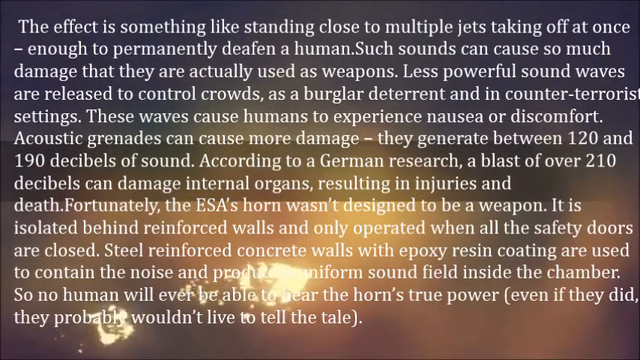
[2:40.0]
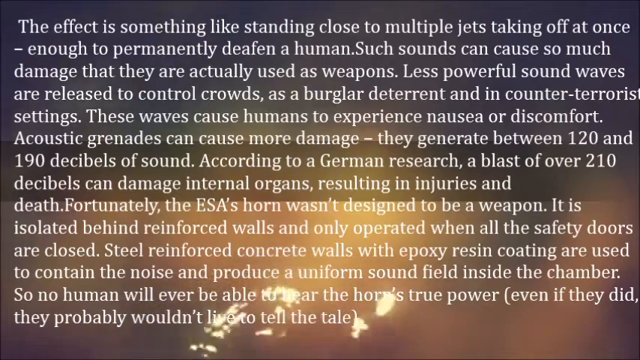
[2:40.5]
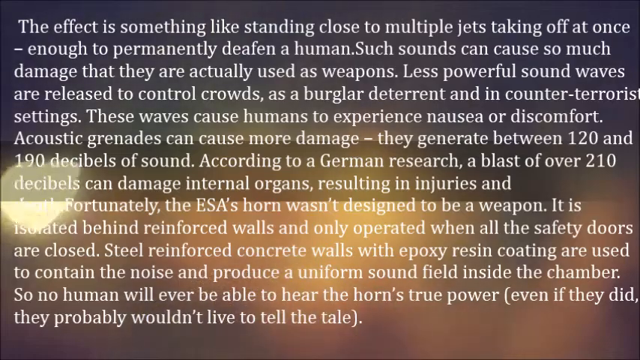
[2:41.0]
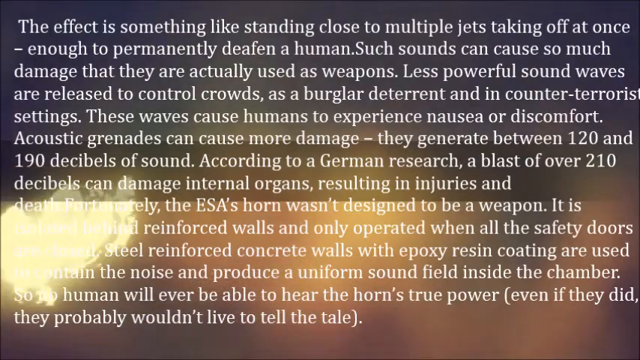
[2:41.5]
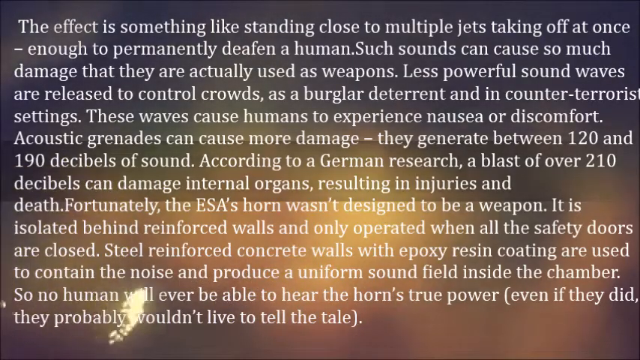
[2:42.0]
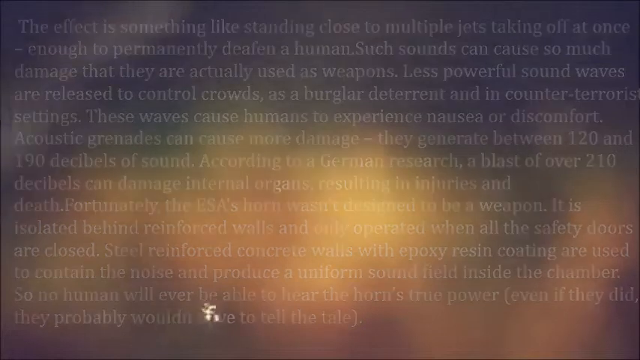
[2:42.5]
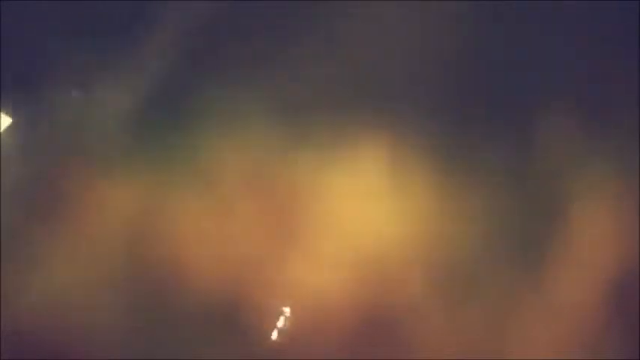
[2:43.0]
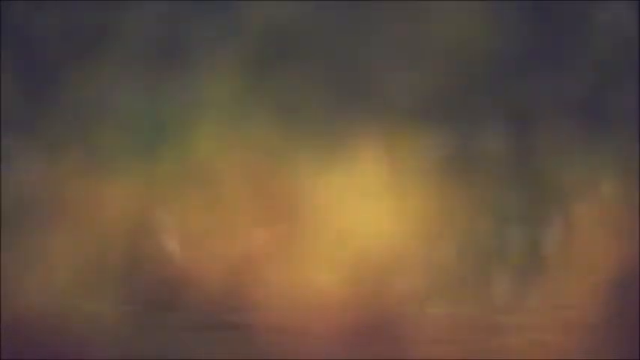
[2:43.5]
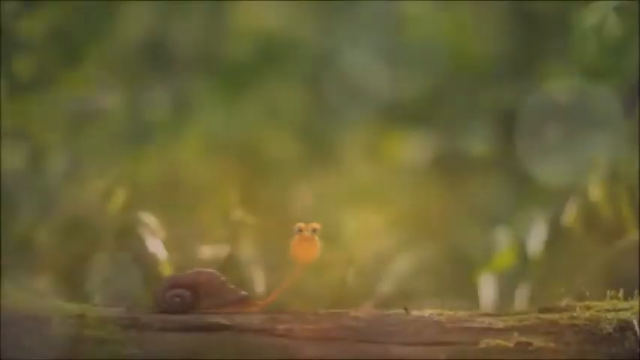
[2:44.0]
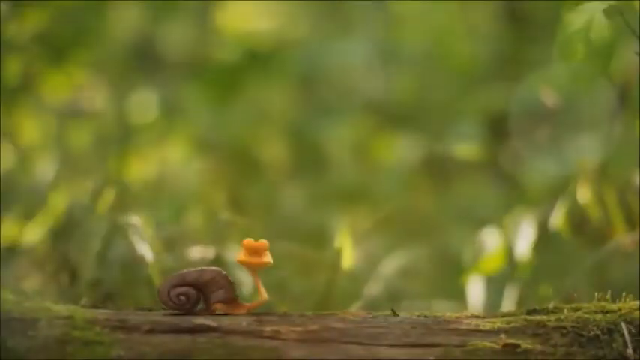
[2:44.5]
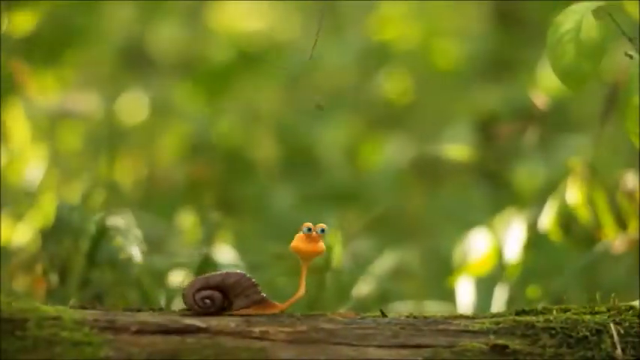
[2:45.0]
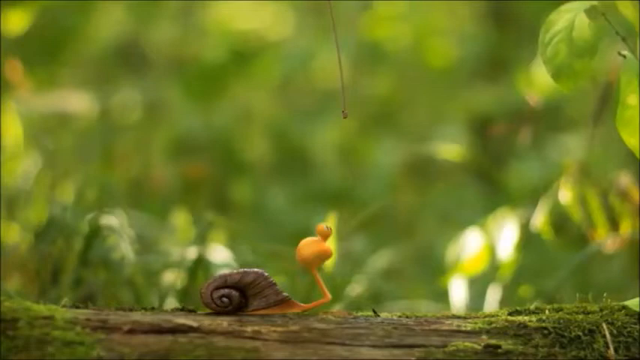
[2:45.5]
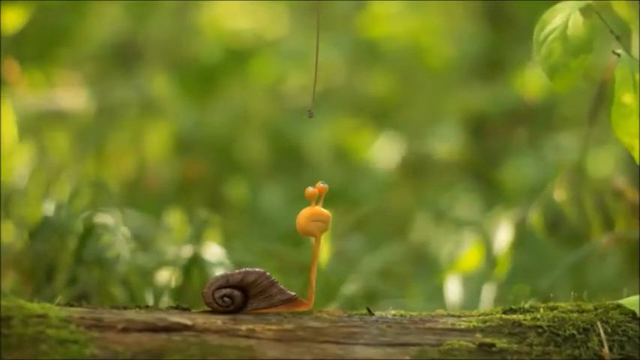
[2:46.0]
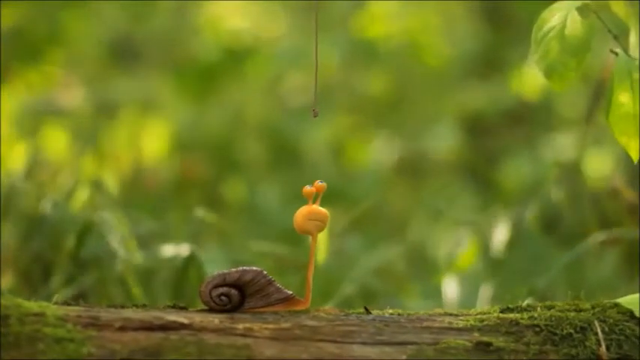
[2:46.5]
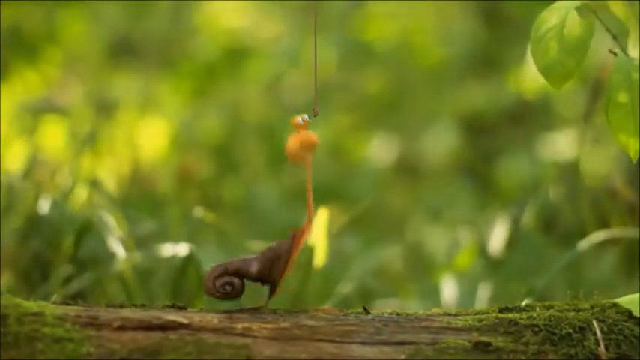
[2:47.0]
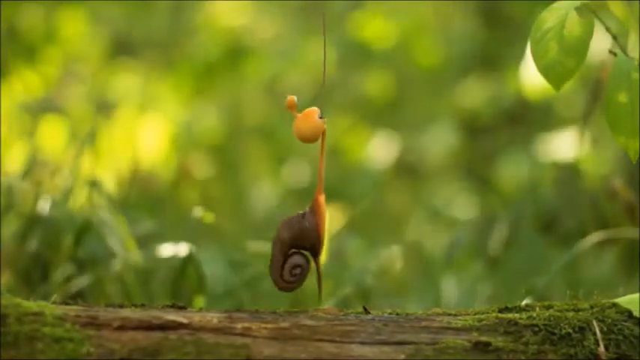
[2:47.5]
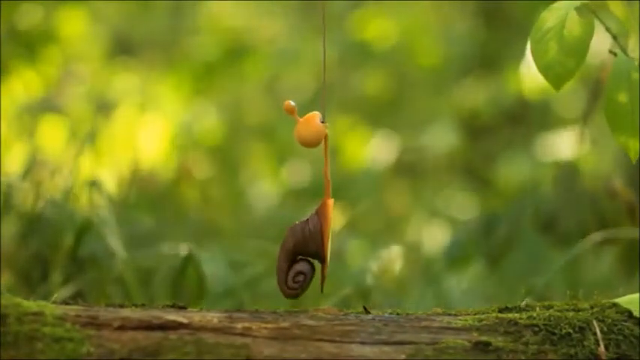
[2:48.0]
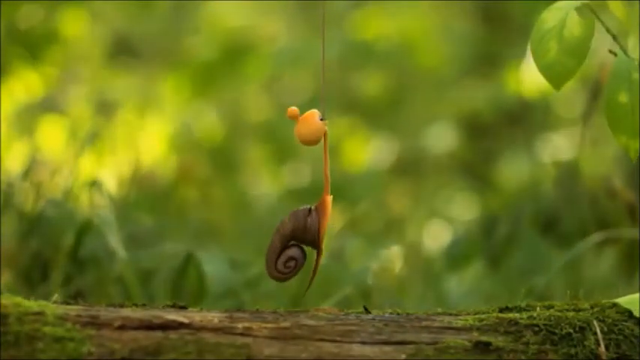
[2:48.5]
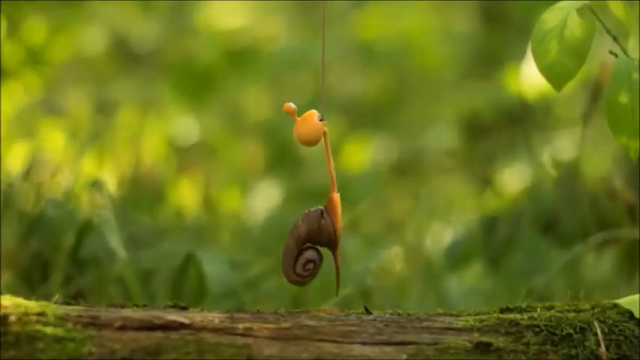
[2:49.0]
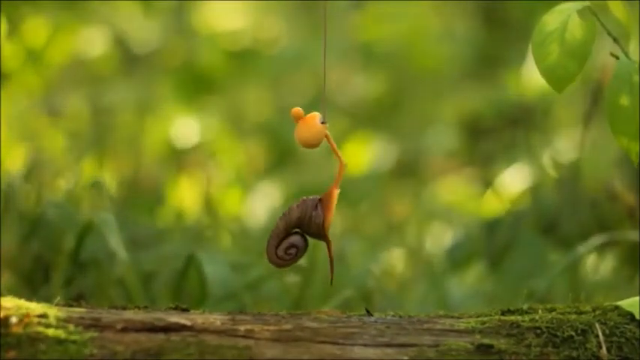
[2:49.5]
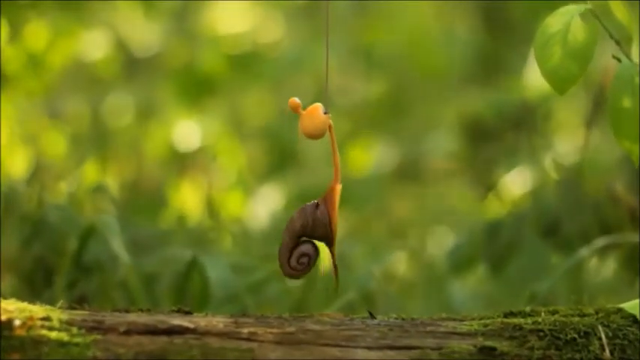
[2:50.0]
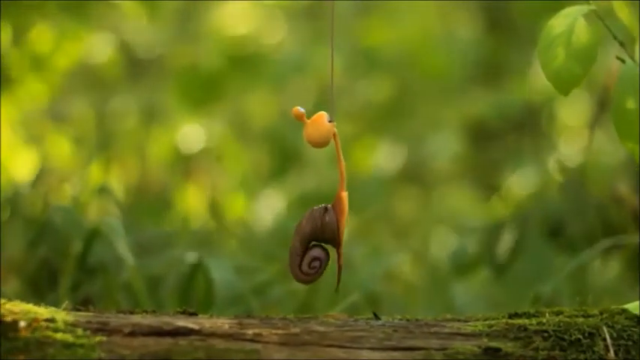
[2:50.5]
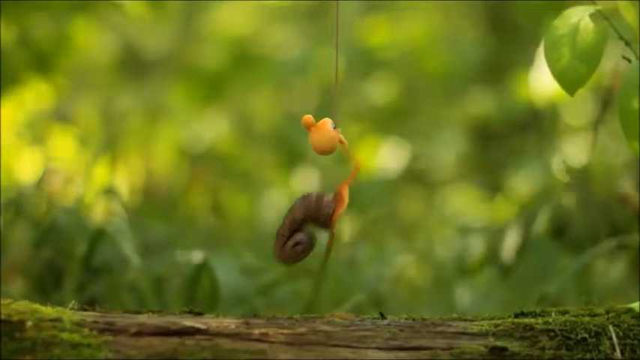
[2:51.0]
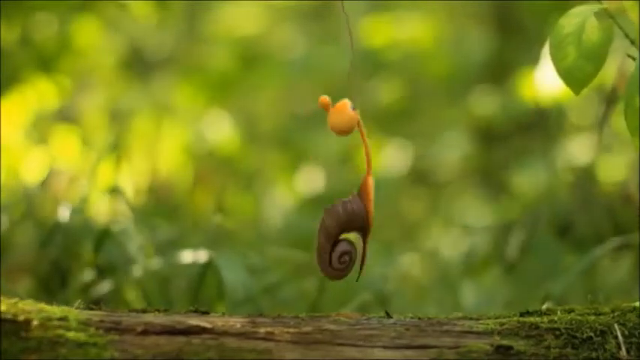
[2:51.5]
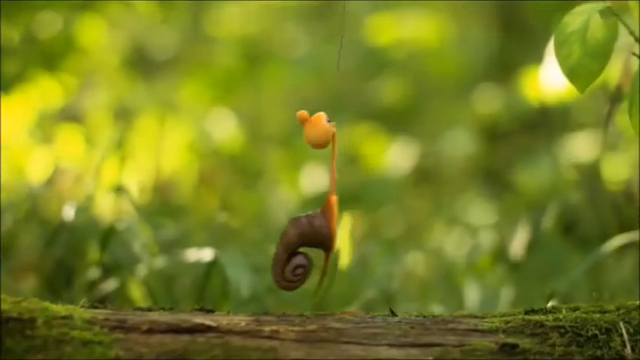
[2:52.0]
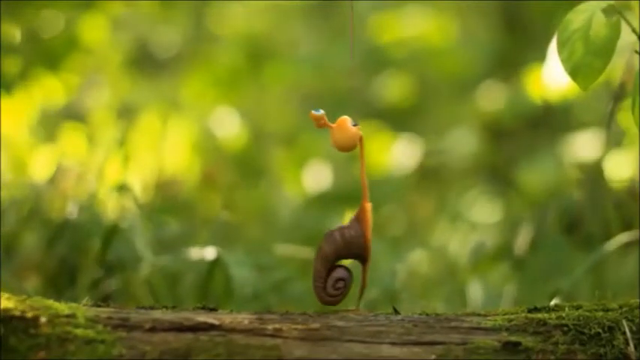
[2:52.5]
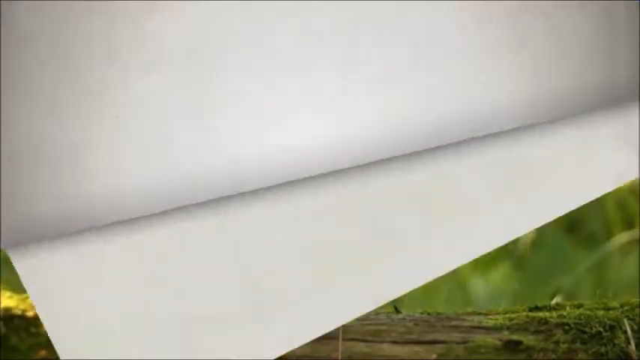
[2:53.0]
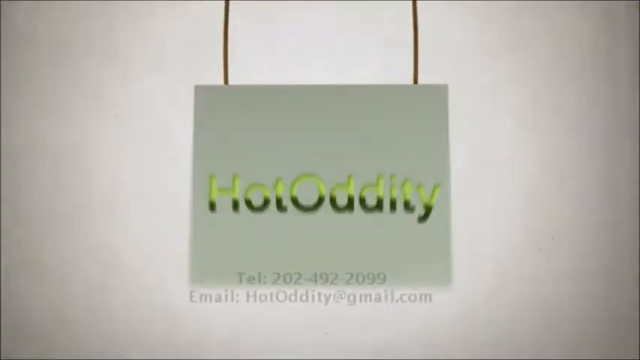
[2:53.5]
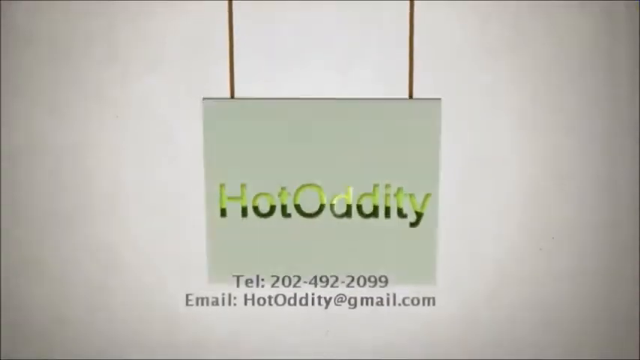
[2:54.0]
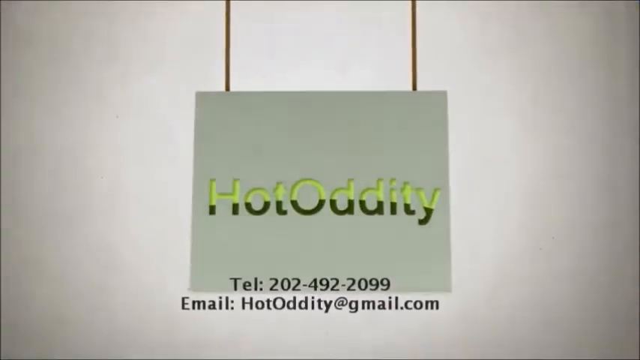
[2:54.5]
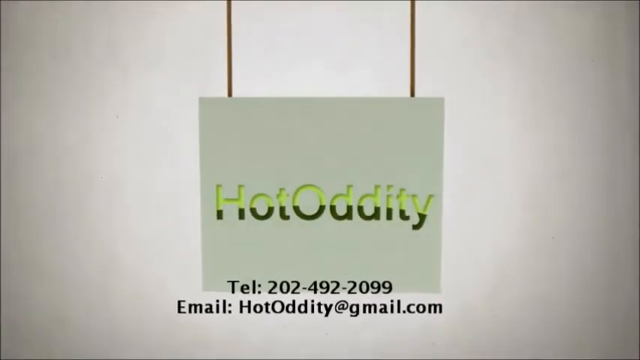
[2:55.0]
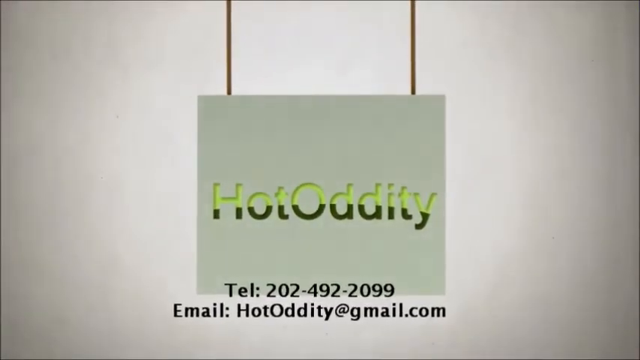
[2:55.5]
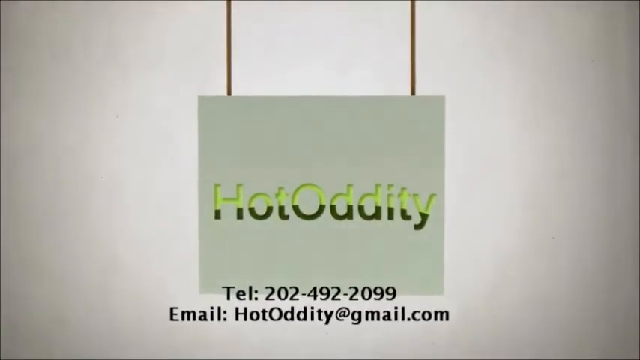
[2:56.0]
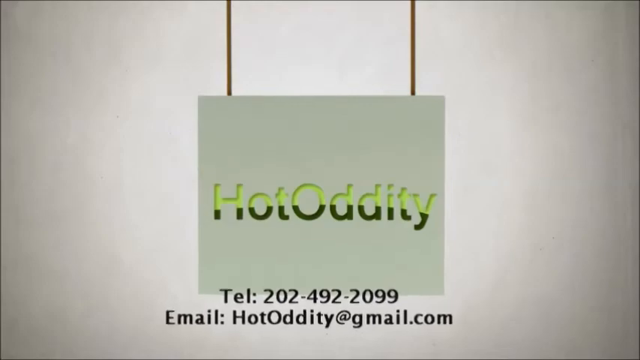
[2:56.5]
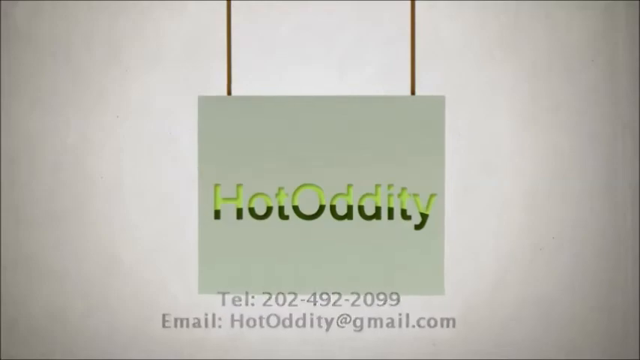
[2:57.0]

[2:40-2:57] The yellow cartoon snail appears again, on the tree trunk, with leaves and grass in the background. The snail has two eyes and a brown shell. A brown rope comes down, and the snail grabs onto it with its teeth, apparently trying to pull something down. It struggles, and finally pulls hard enough that it comes down. Text then shows the name of the channel, a telephone number, 202-492-2099, and a Gmail email address.